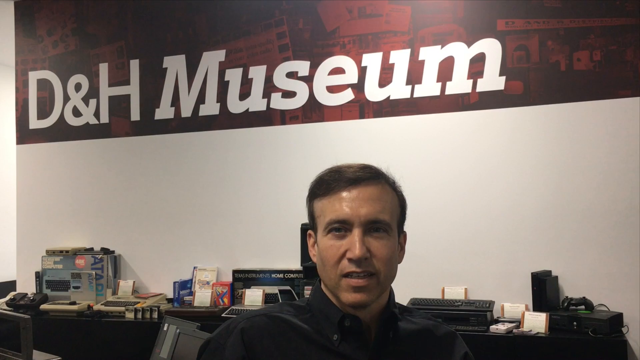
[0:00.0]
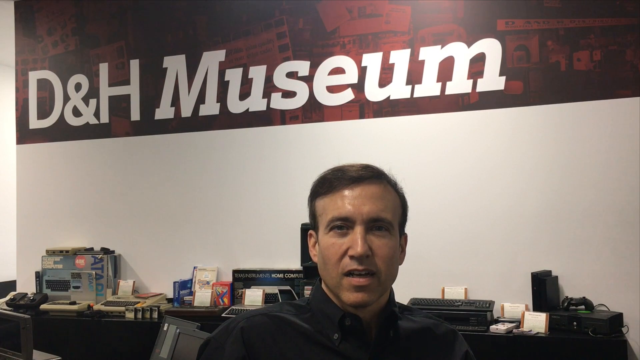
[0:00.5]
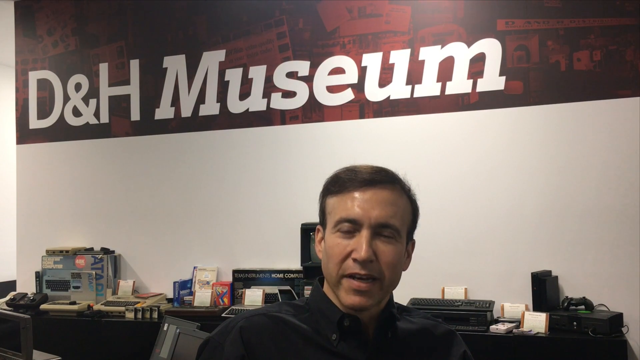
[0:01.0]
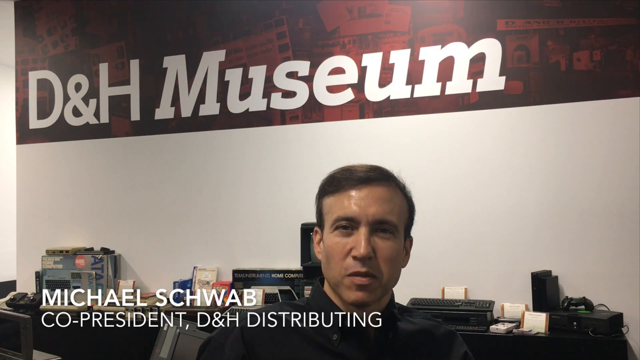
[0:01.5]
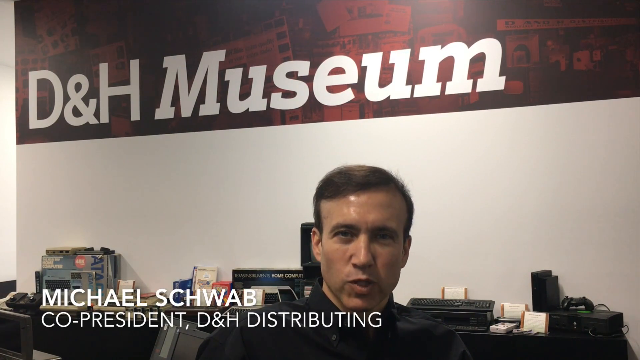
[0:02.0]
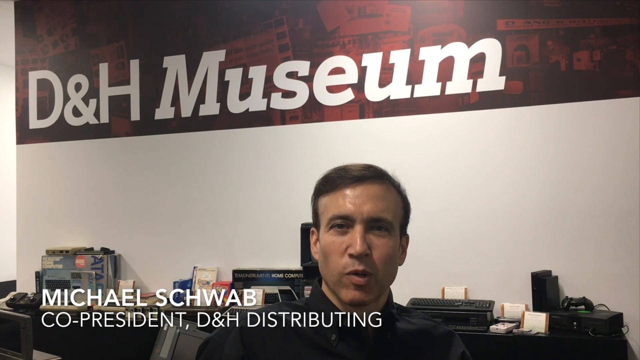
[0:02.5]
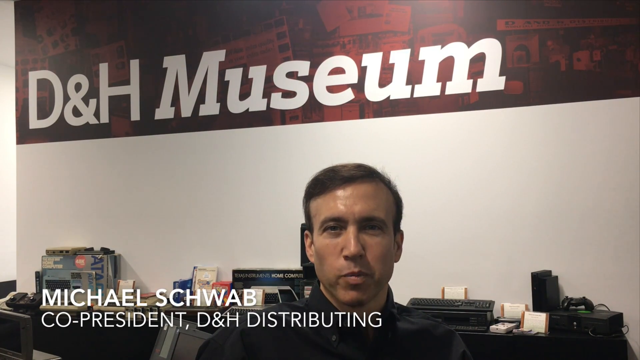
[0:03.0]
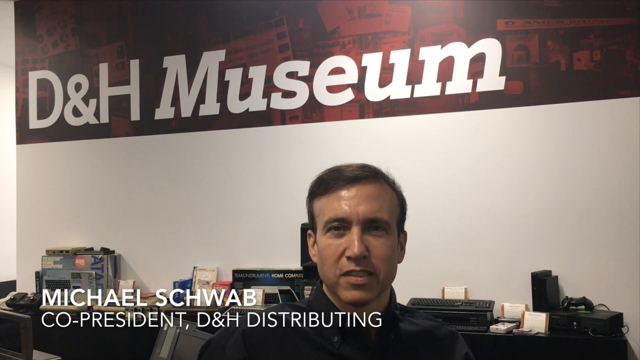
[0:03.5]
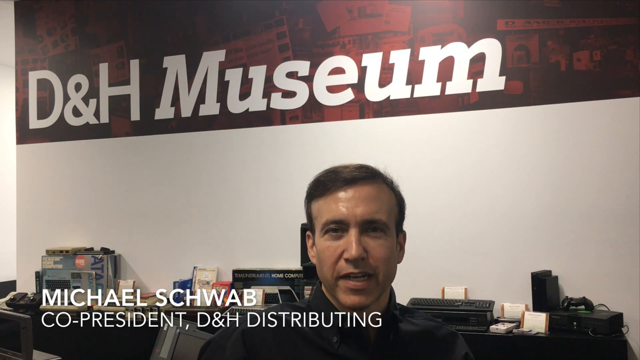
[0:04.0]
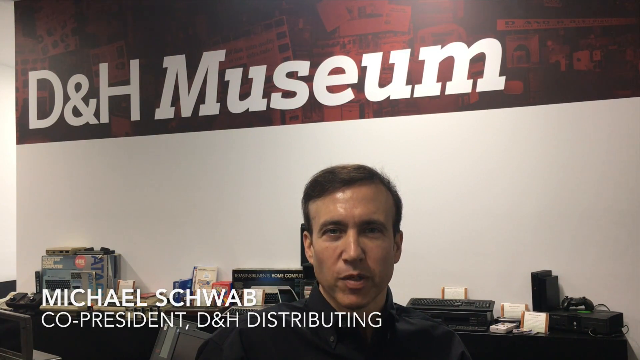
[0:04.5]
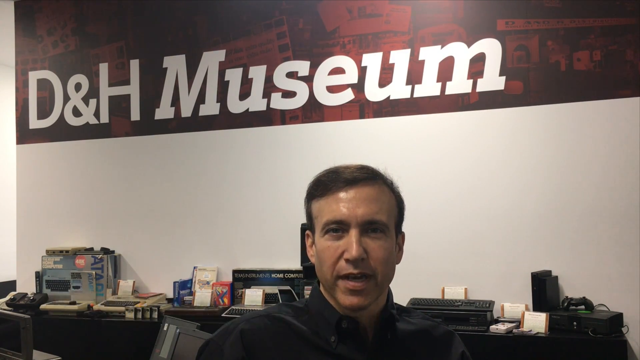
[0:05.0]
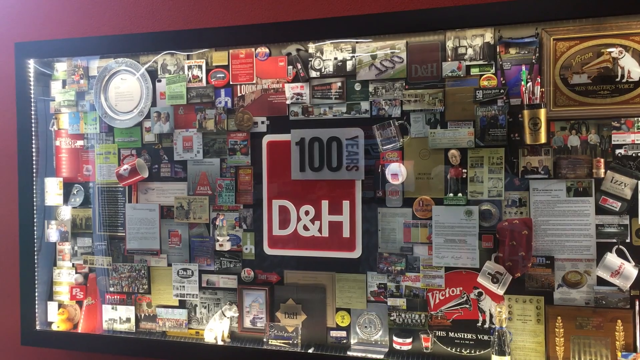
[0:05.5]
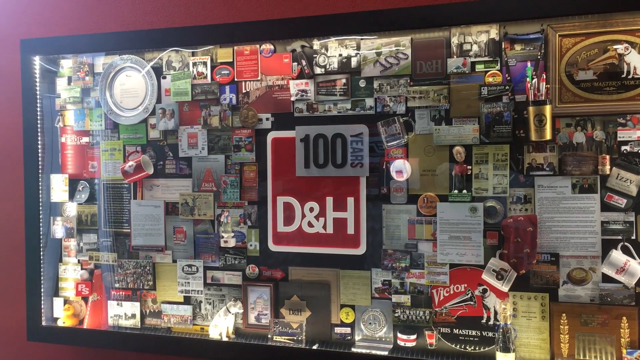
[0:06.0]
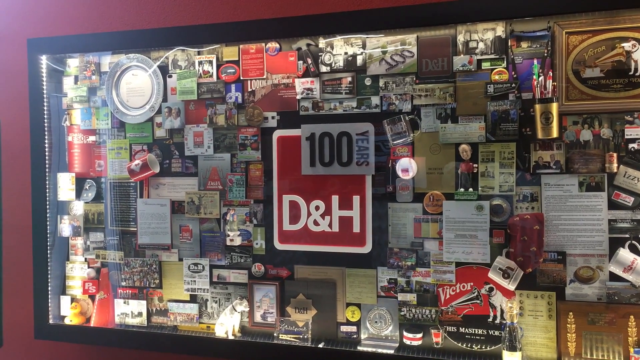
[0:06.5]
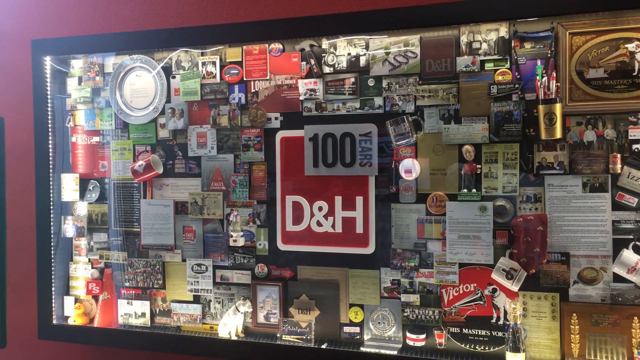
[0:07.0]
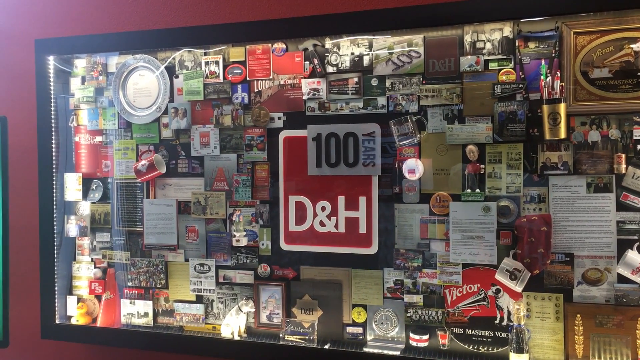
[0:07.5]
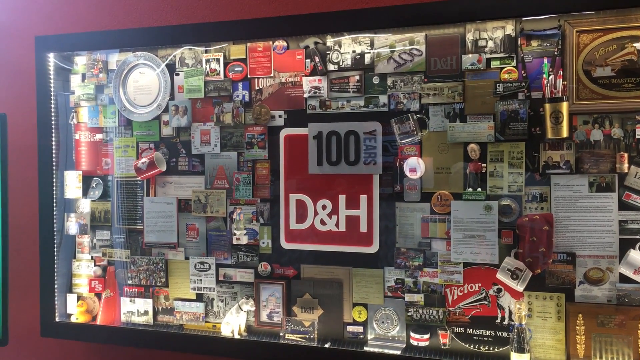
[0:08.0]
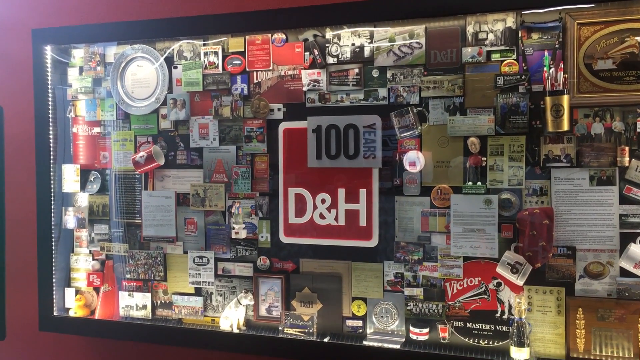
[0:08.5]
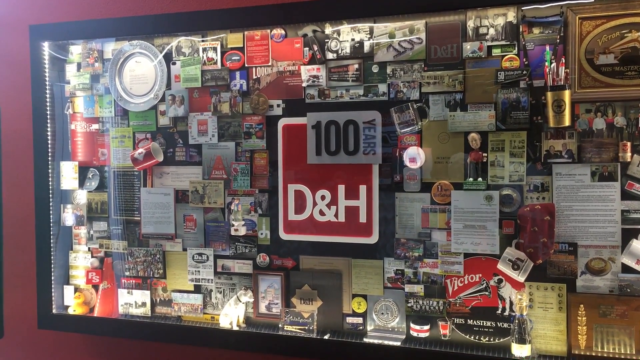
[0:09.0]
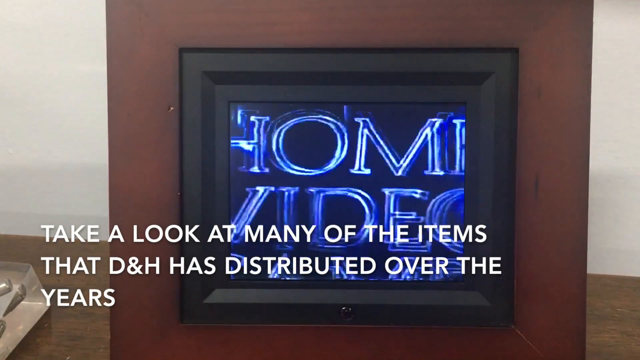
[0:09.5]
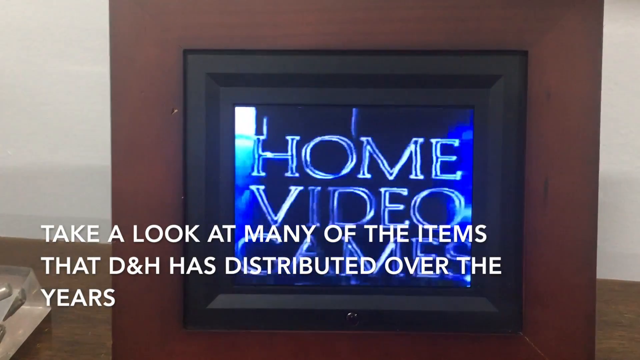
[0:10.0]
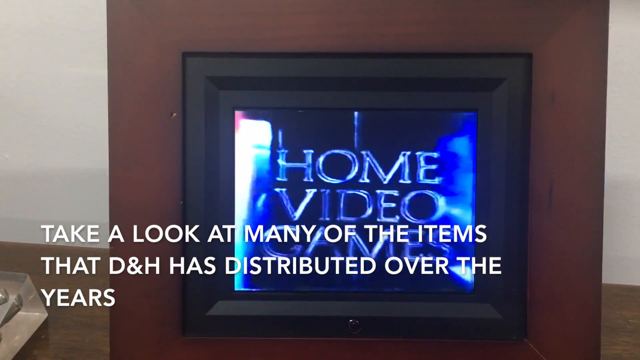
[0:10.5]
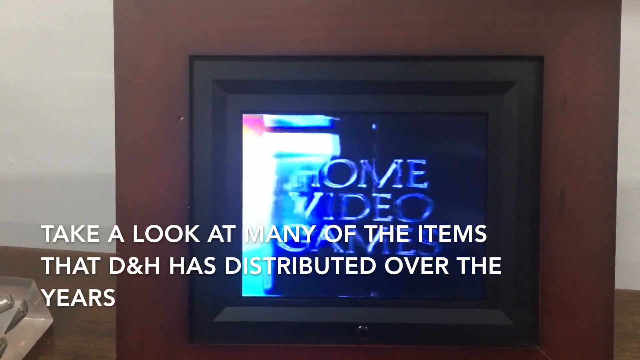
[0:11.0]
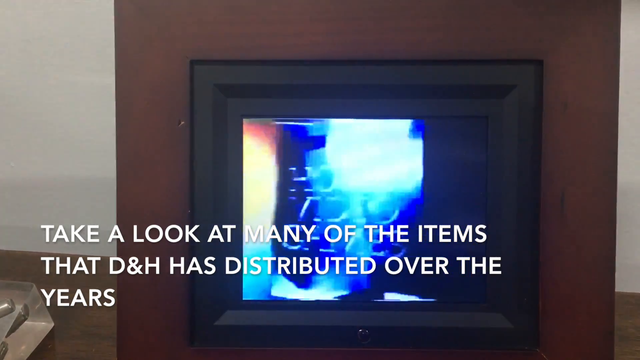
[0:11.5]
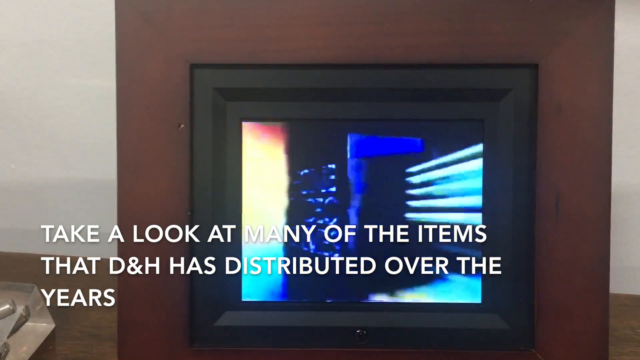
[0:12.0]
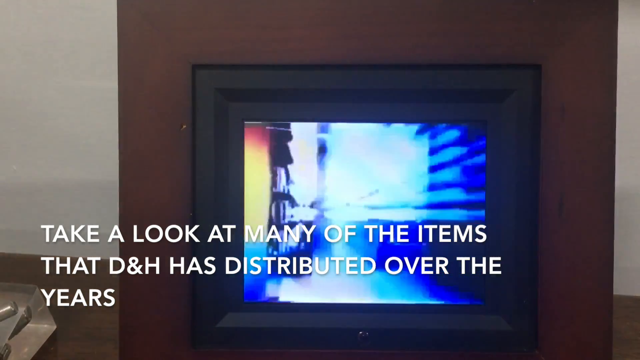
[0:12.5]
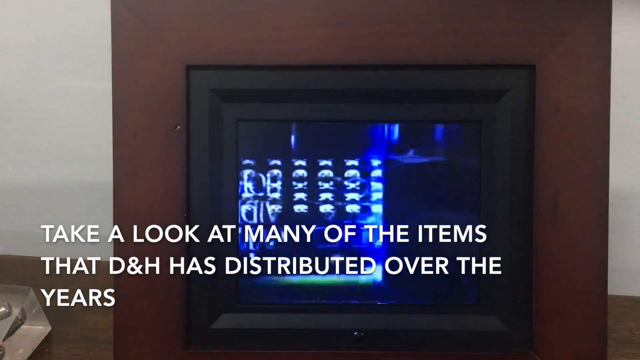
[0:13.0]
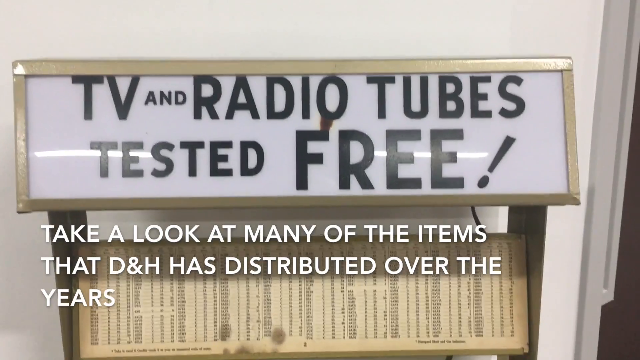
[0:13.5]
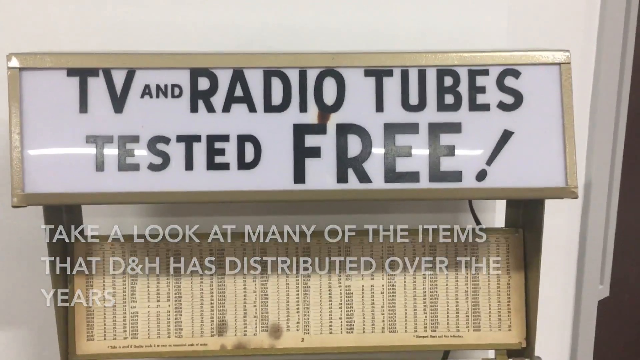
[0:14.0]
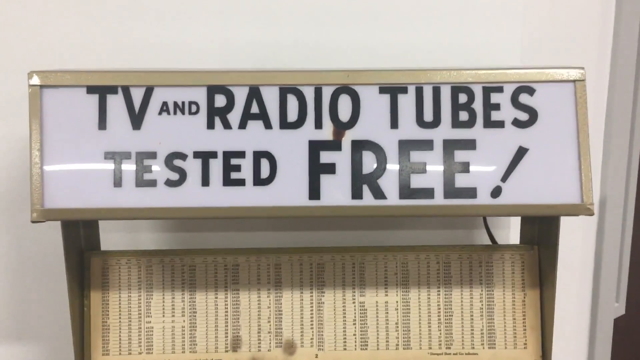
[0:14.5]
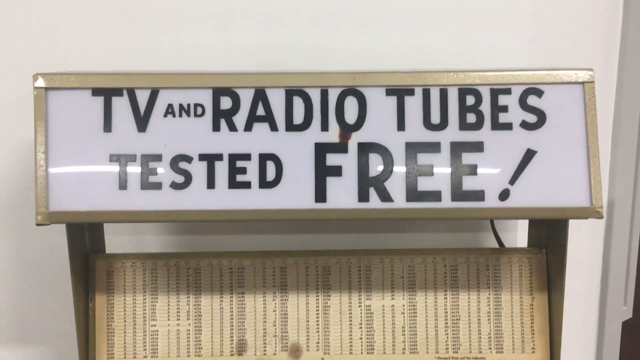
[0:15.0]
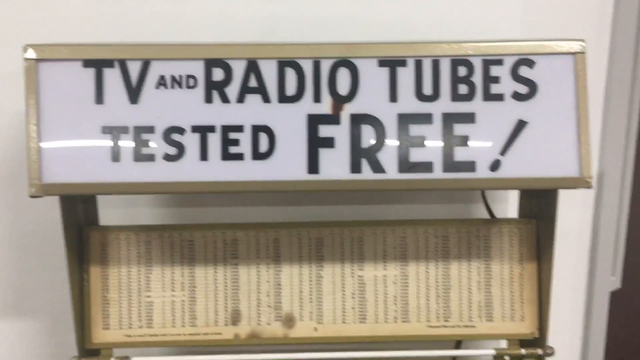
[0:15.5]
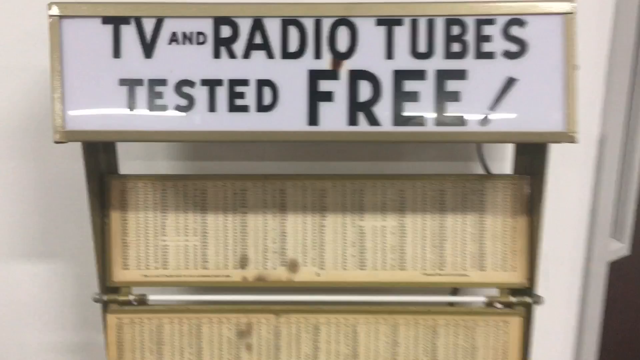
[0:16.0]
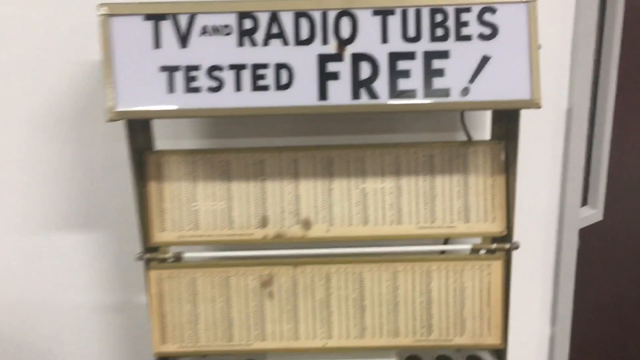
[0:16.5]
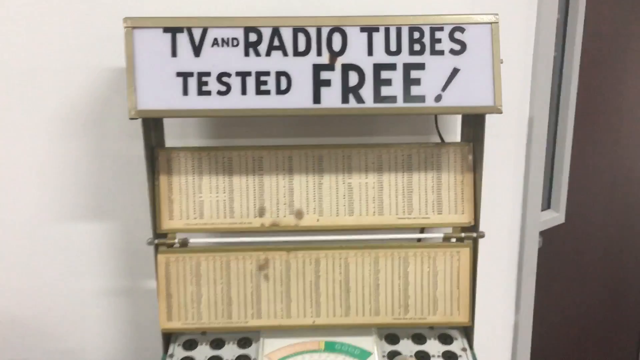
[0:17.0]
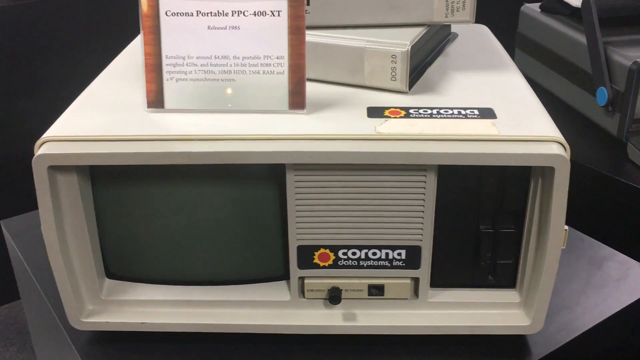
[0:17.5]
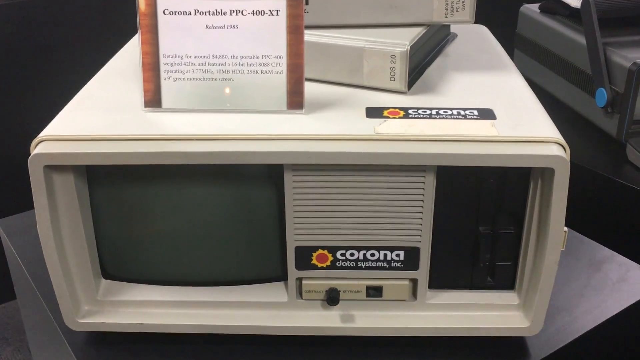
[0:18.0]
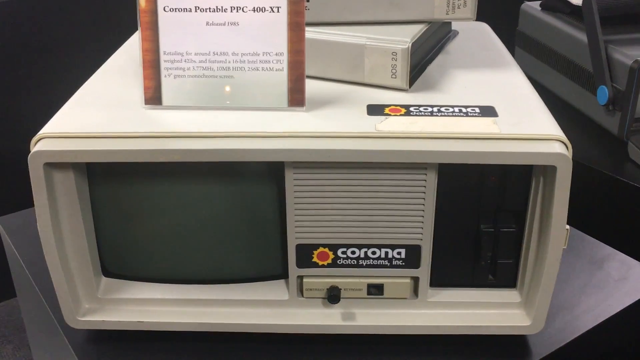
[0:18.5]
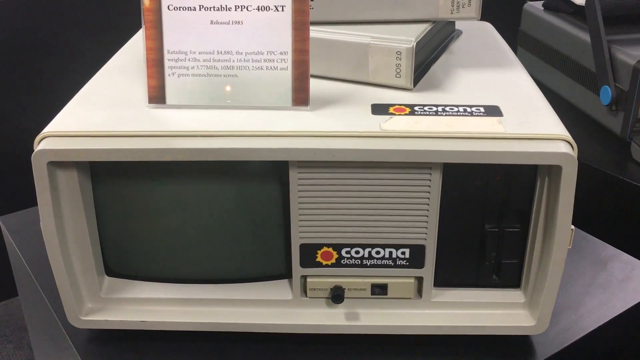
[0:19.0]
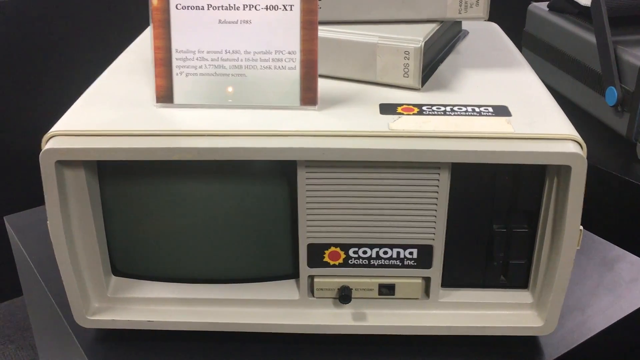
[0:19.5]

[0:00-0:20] The museum is named DNH, and the co-president of DNH Distributing is named as Michael Sanwabi. A board holds a lot of pictures together, and there is a reference to TV and radio tubes tested free; these may be machines used for testing TV and radio tubes. The museum seems to be a technological museum of some kind. A person is describing the DNH museum; he is the co-president of the Science Institute.